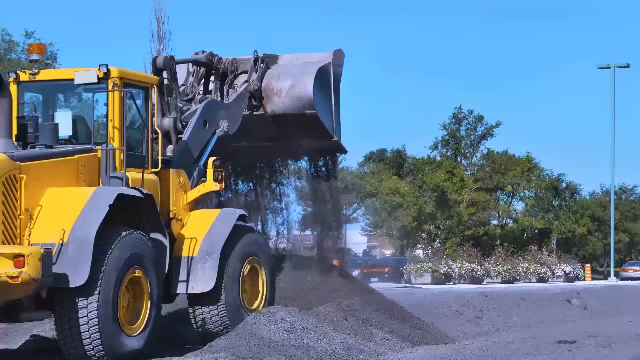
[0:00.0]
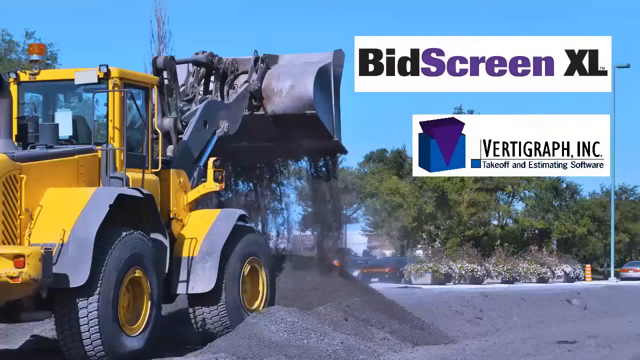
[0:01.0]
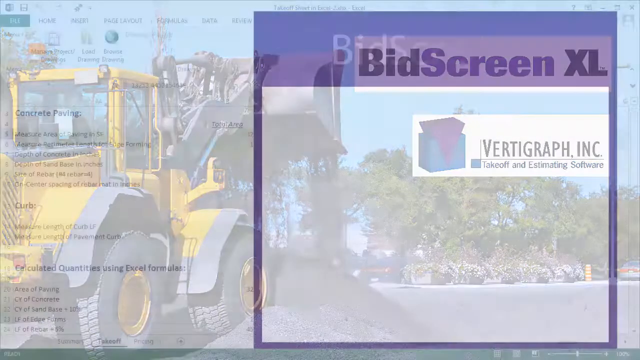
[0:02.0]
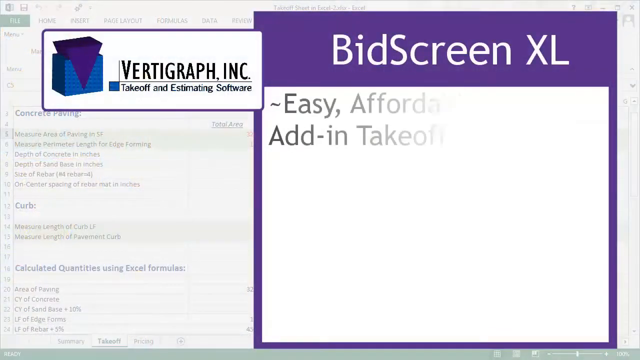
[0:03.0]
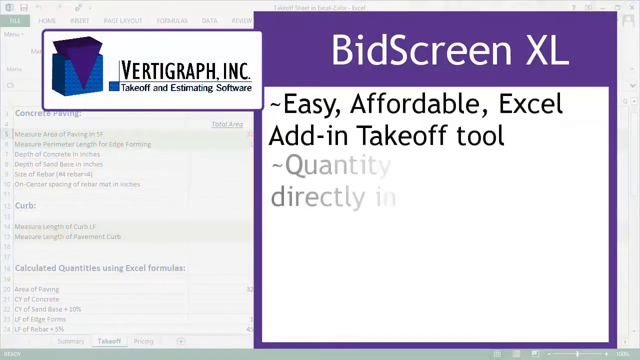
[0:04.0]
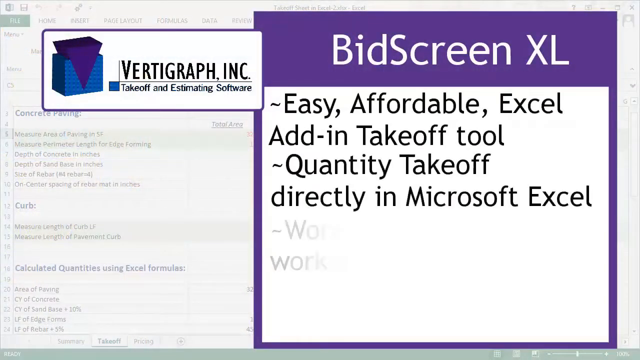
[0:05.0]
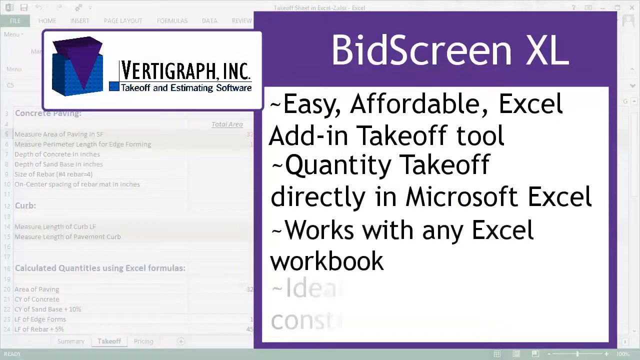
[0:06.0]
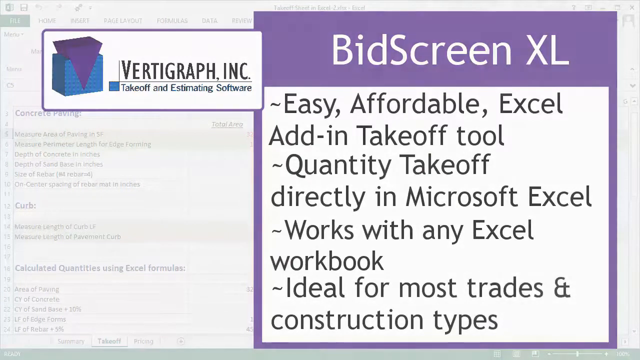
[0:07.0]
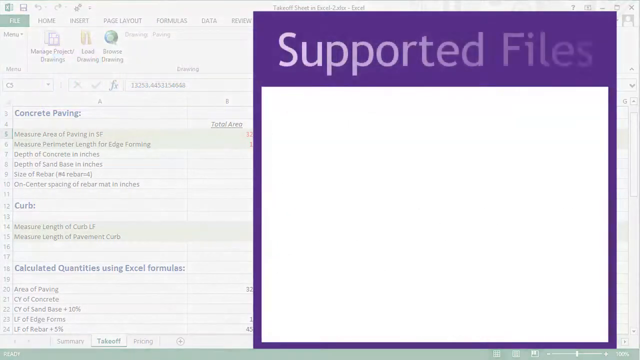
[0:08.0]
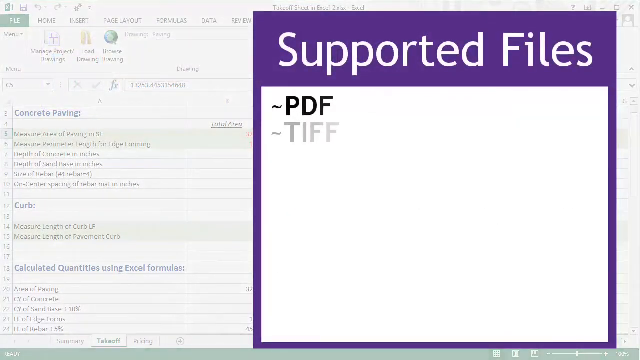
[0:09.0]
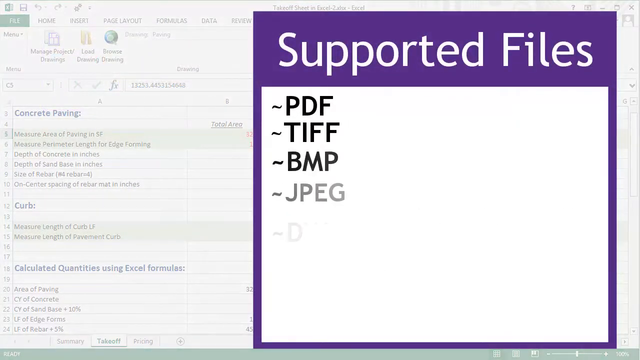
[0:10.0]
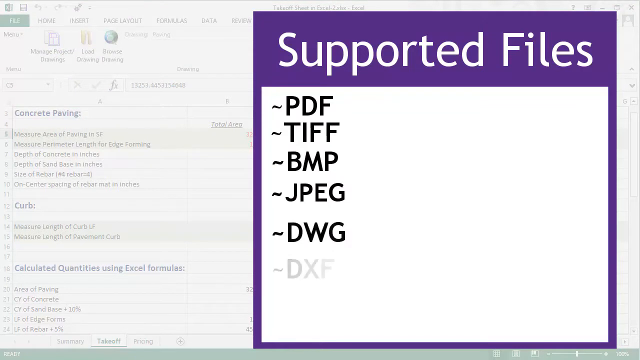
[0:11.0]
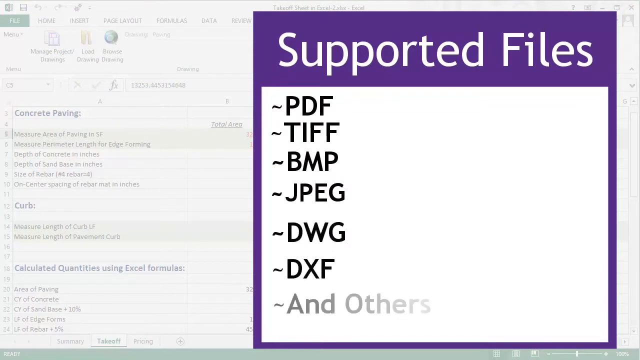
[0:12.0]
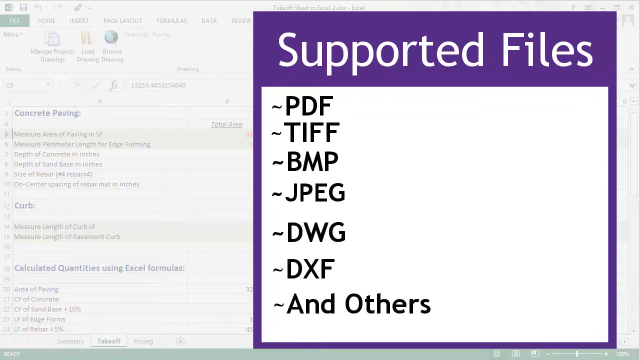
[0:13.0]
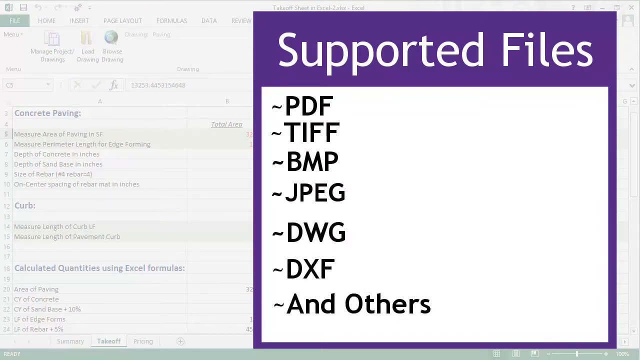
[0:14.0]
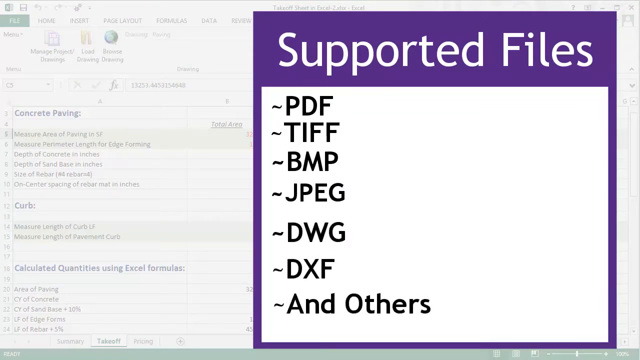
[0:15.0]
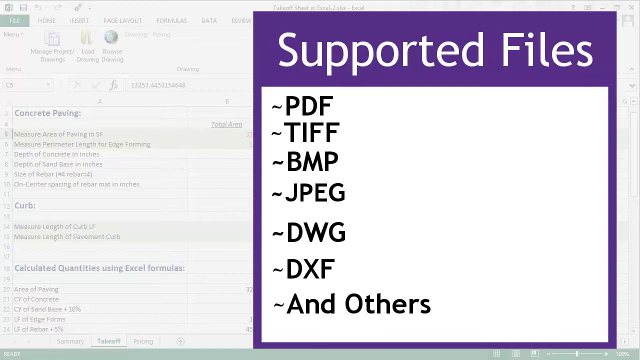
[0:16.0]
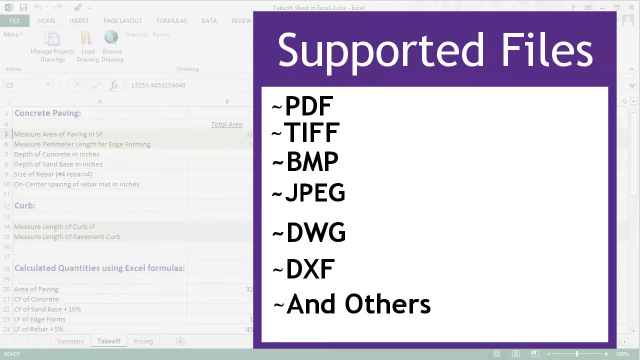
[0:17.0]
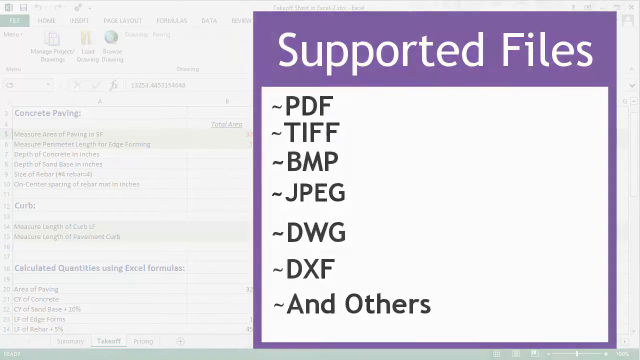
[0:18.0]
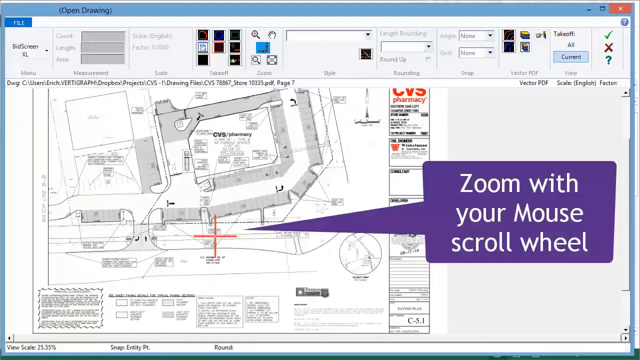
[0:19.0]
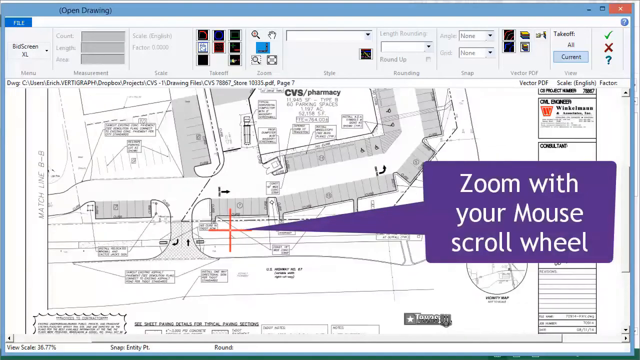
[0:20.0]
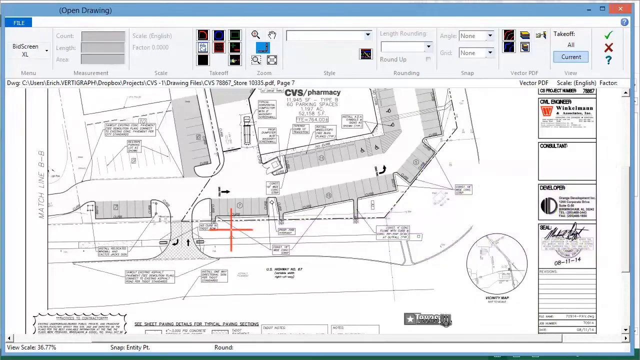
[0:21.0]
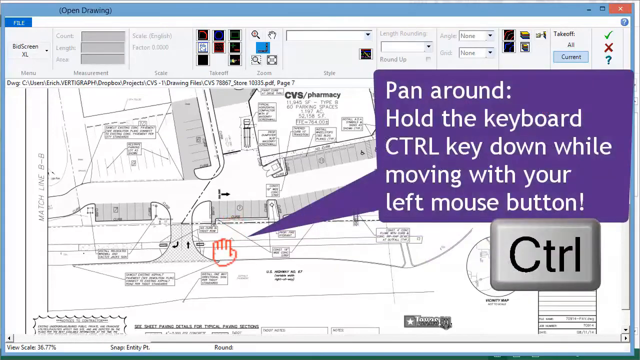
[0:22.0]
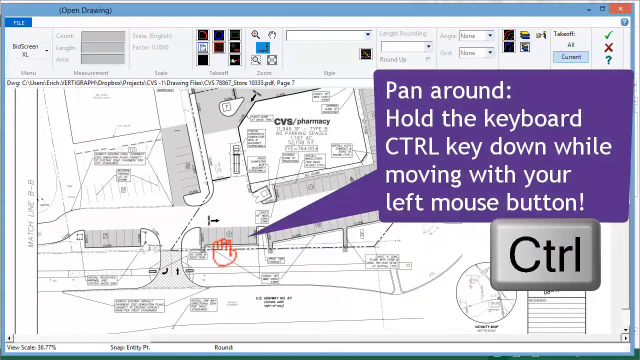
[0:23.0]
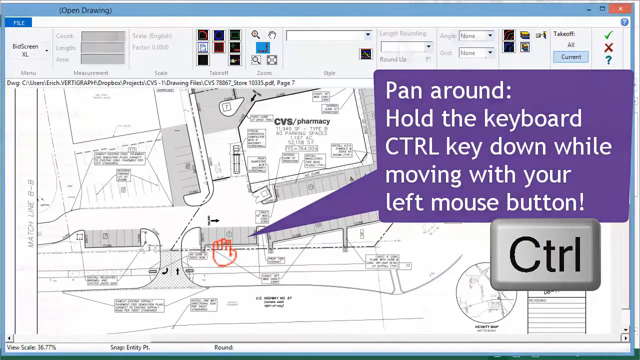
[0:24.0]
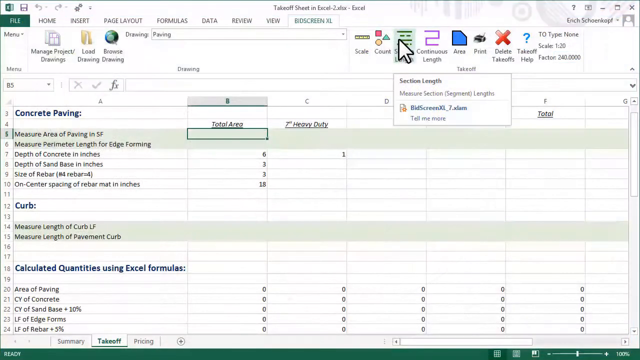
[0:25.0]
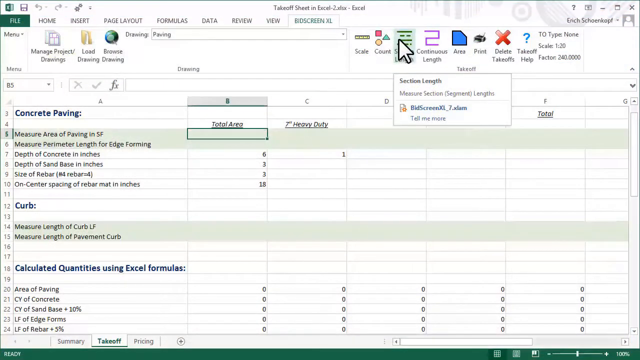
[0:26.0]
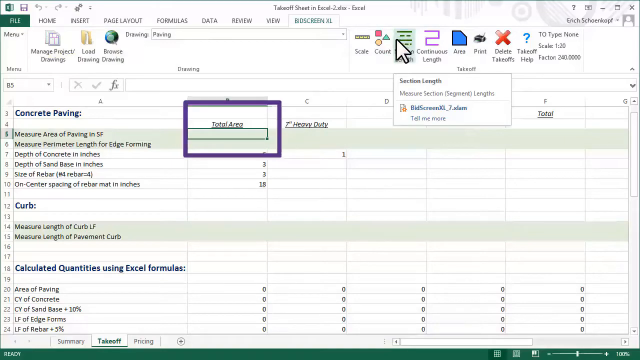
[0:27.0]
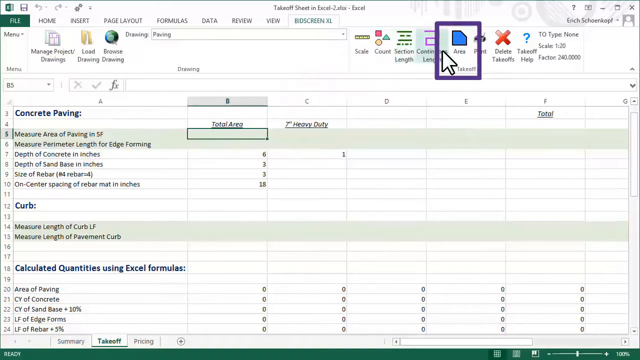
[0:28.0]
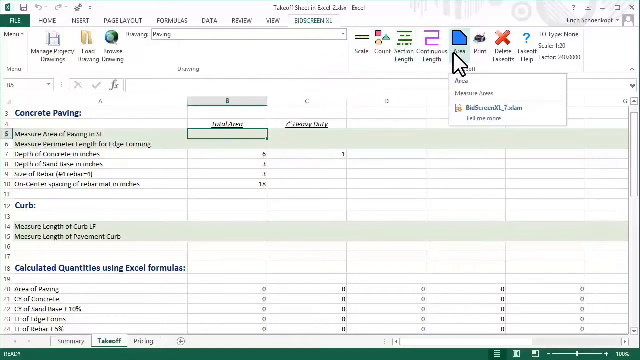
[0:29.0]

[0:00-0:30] The video presents Bitscreen, described as easy, affordable add-in takeoff tools for quality takeoff, directly in Microsoft Excel, that work with any Excel workbook, for construction types. A list of supported files appears: PDF, CIFF, BMP, JPEG, DWG, DXF and others. Viewing controls are shown: zooming with the mouse scroll, and panning around by holding down the control key while moving with the left mouse button. An Excel sheet is displayed showing concrete, a sheet that can be used for construction.